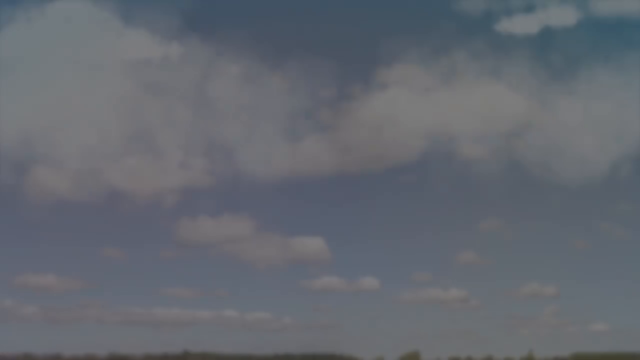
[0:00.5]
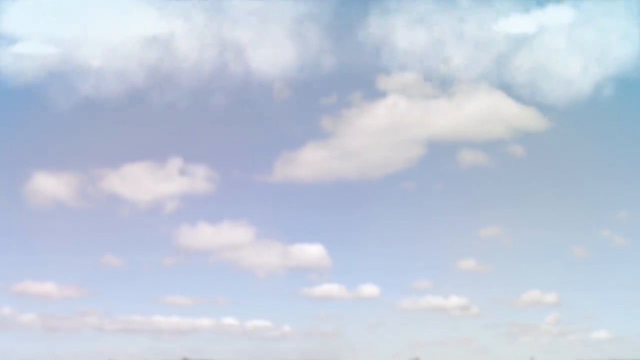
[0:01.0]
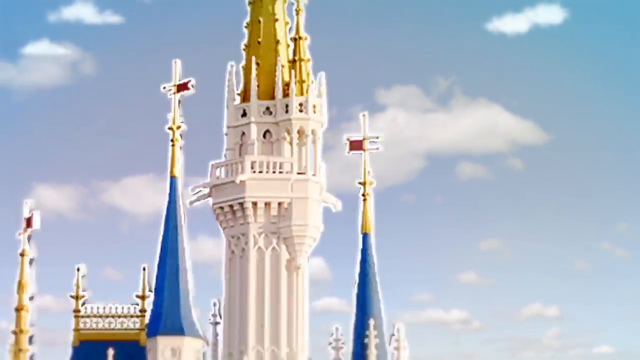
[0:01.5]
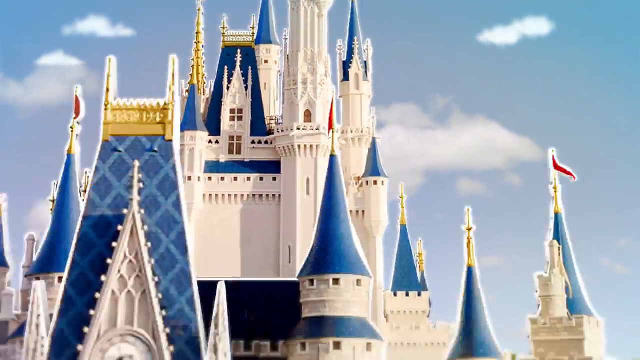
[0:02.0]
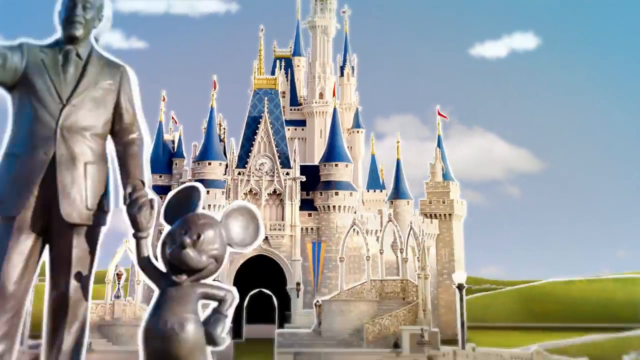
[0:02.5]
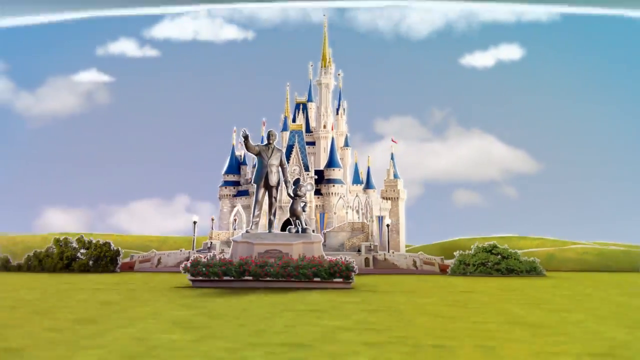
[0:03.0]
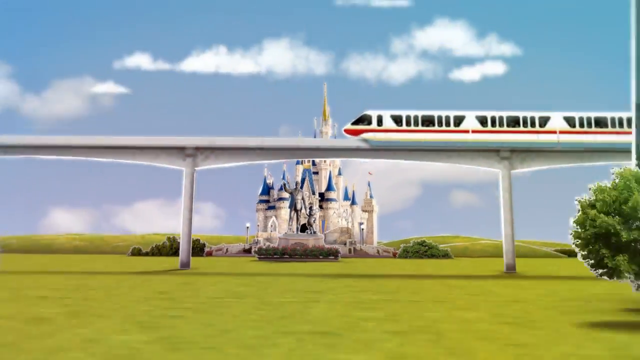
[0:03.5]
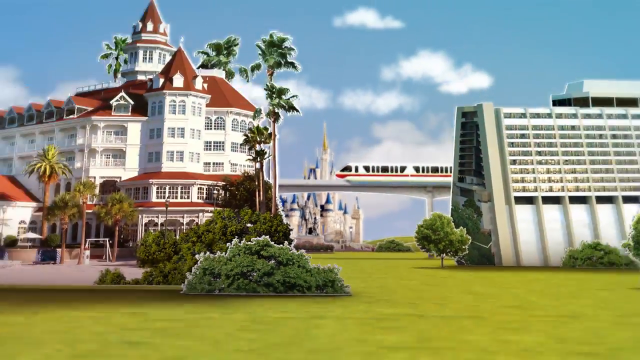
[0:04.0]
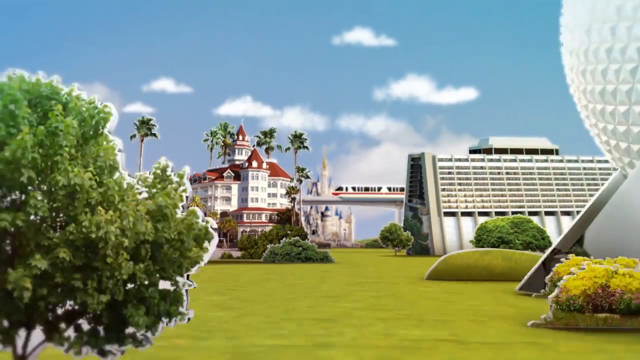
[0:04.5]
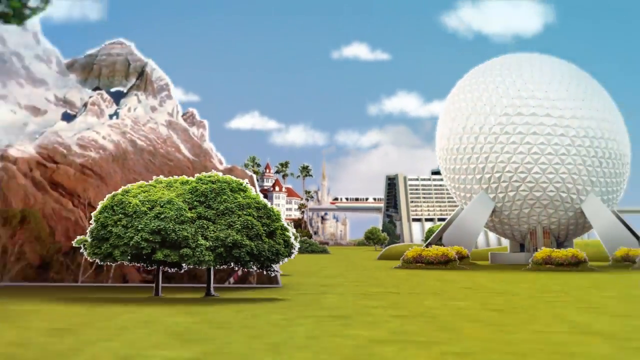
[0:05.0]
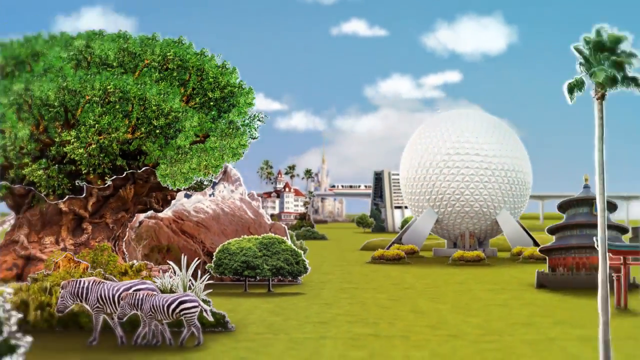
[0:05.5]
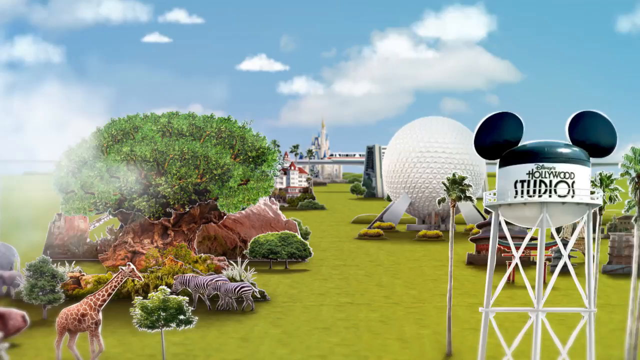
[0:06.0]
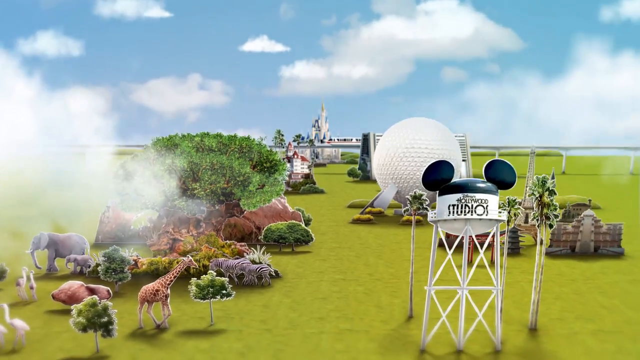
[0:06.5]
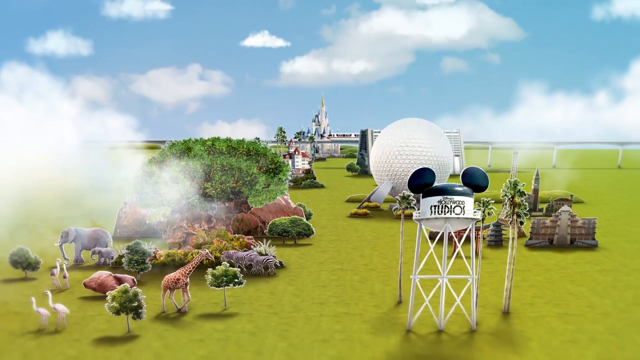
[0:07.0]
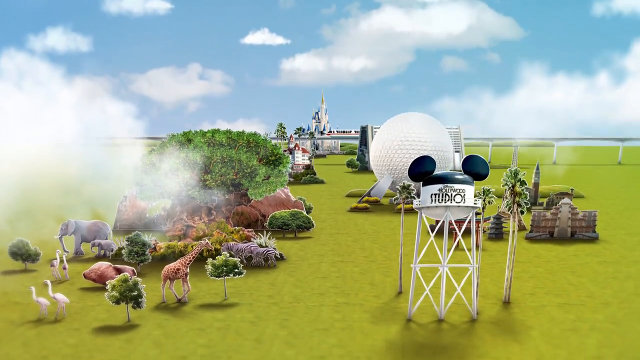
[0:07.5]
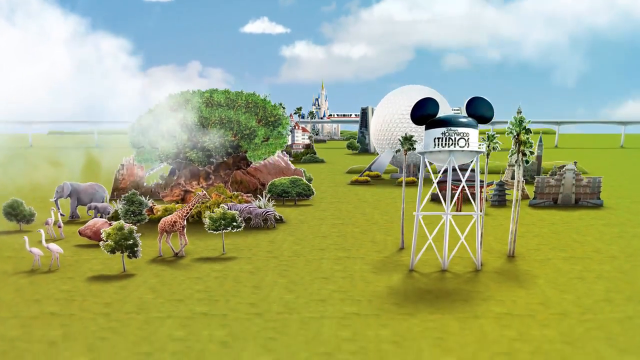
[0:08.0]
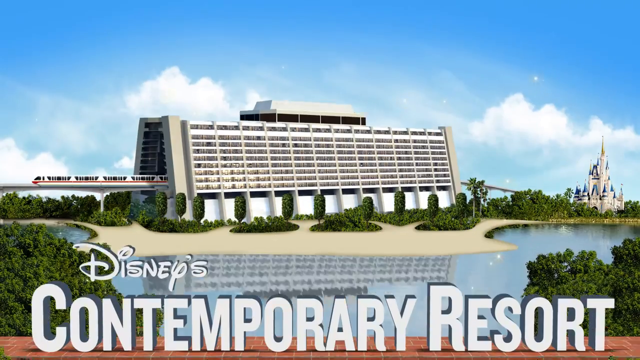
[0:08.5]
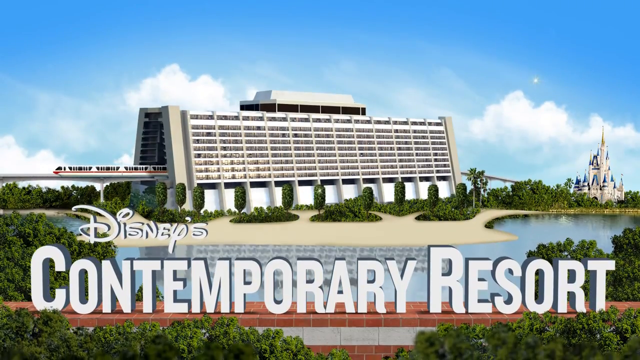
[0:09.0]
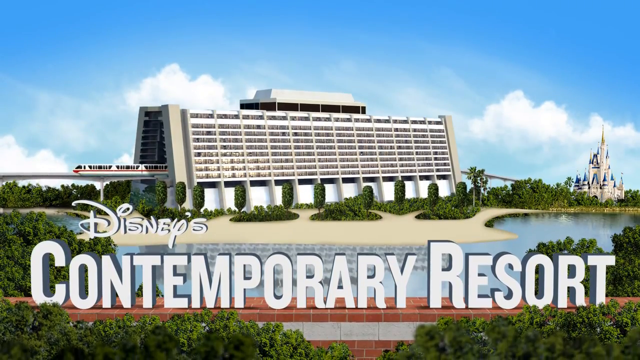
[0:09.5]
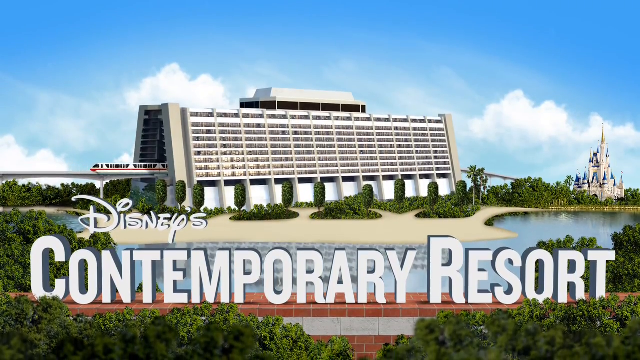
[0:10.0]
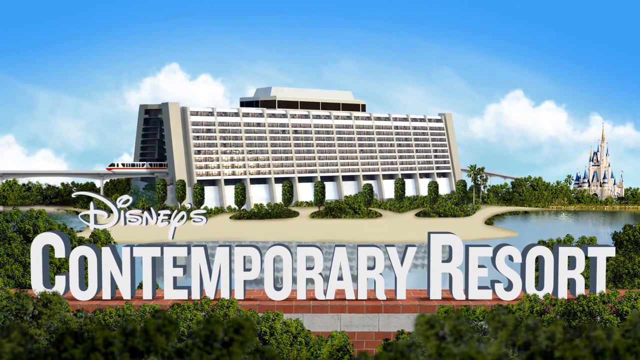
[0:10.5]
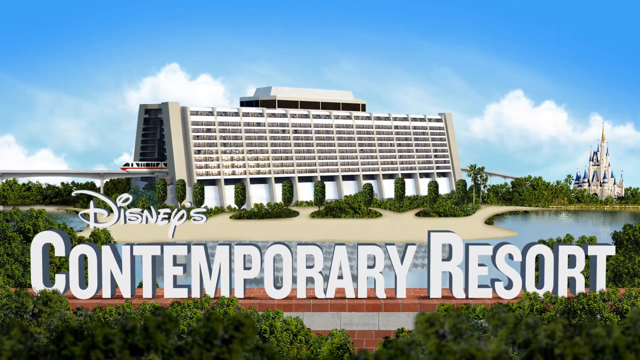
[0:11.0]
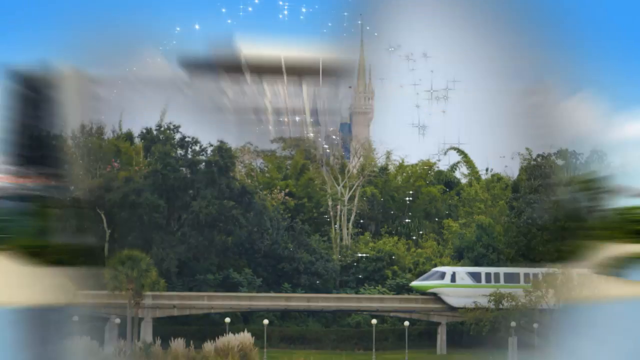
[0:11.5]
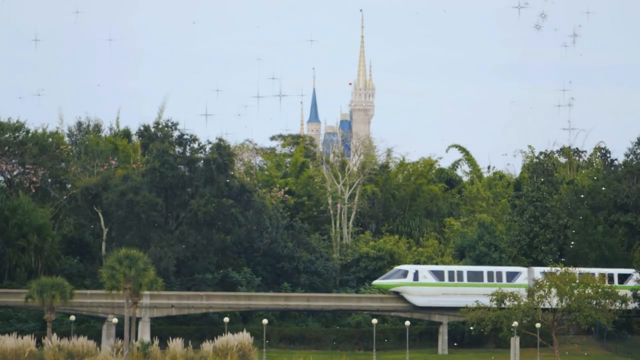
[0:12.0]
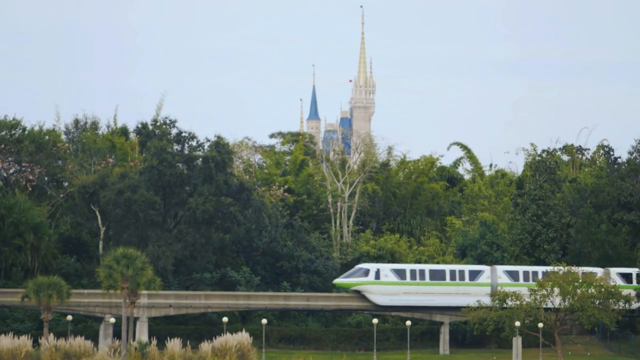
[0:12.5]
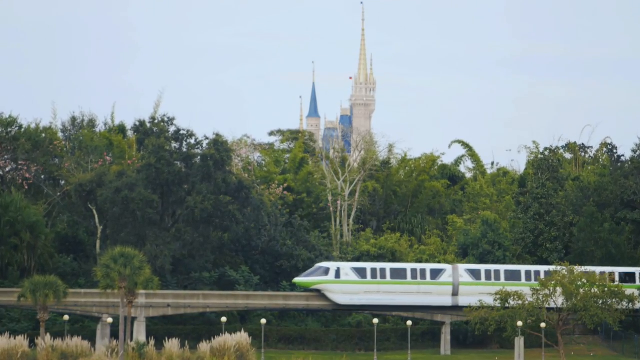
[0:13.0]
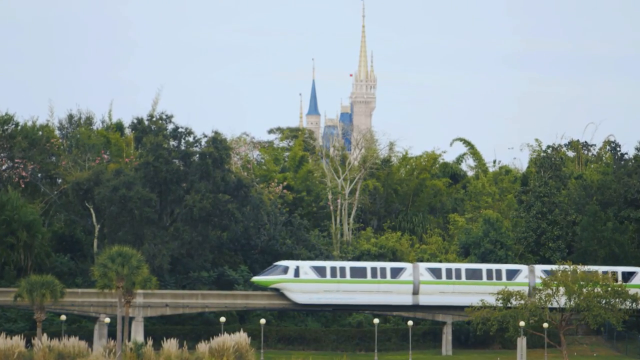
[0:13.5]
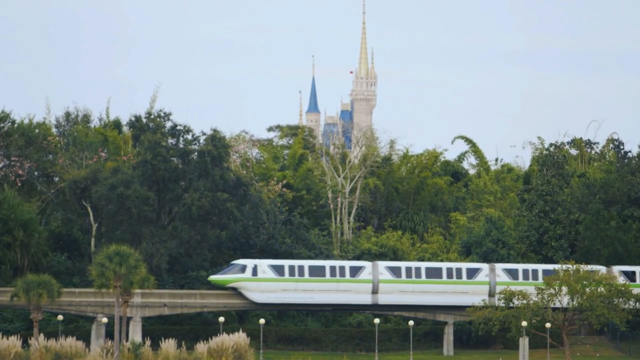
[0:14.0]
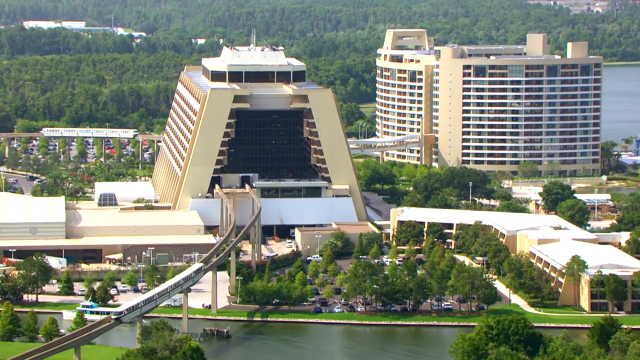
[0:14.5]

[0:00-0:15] The video is titled "Disney's Contemporary Resort, Walt Disney World," with the Walt Disney Parks logo to the left of the title. It opens on blue sky with white fluffy clouds and spans out to a view of the Disney Castle, with the monorail running in front of it. Images follow of the iconic statue of Walt Disney holding Mickey Mouse's hand, the Epcot golf ball, and the Disney World Resort. As the video spans out, different features of the Disney World Resort appear along with wild animals. The monorail moves along its track across the screen. The title appears at the front in the Disney font, and below it in white all caps it reads "Contemporary Resort."